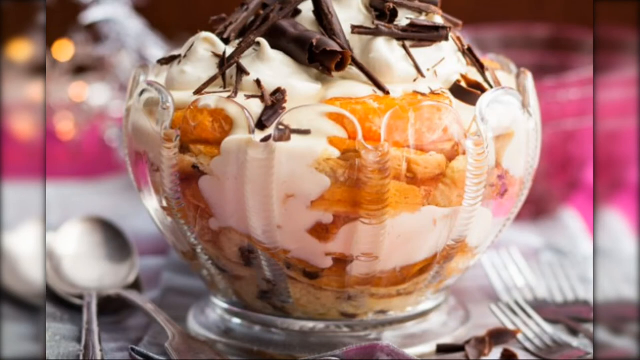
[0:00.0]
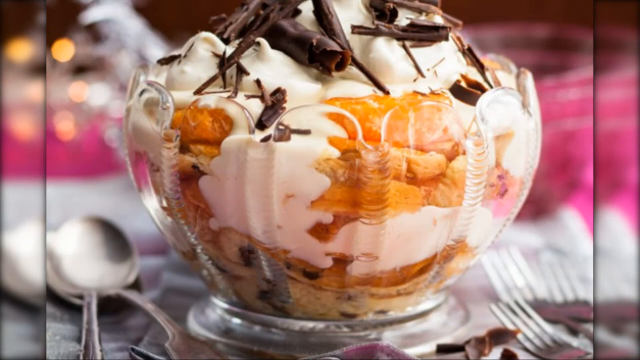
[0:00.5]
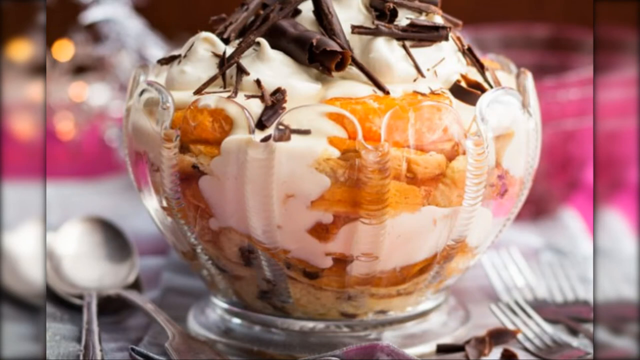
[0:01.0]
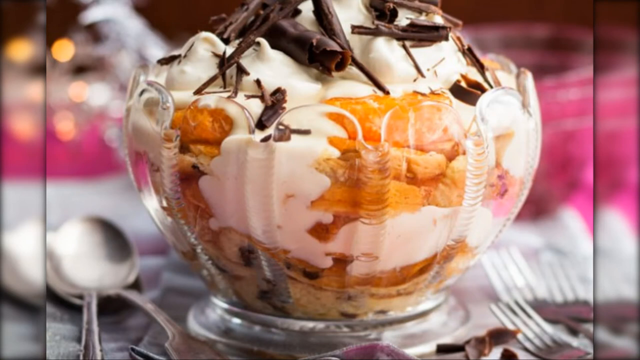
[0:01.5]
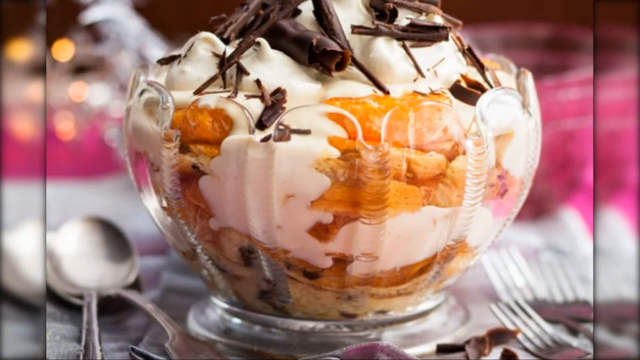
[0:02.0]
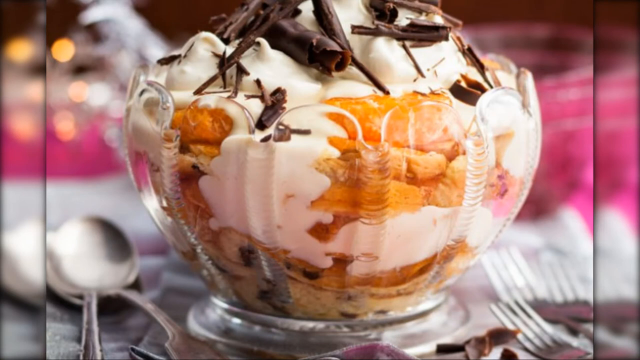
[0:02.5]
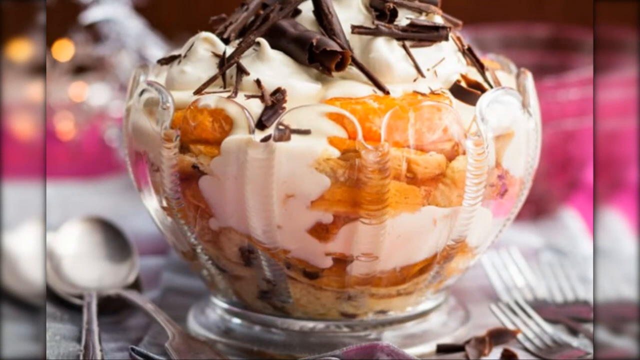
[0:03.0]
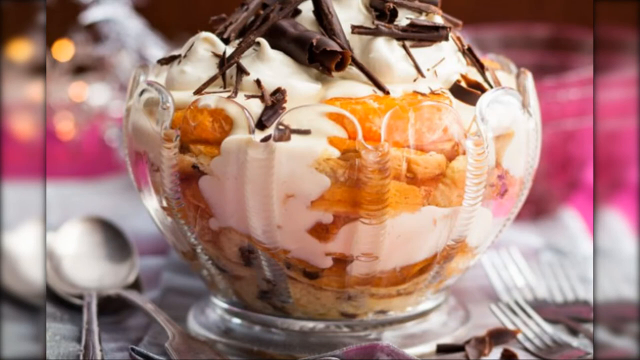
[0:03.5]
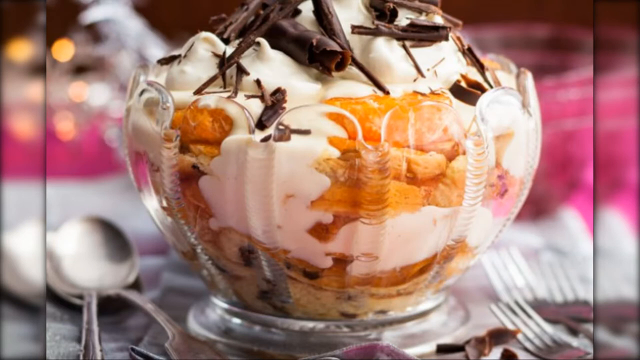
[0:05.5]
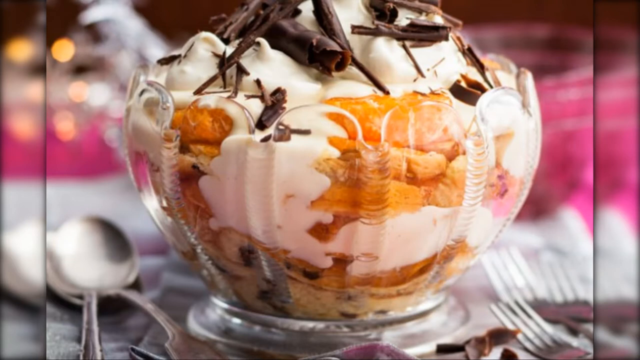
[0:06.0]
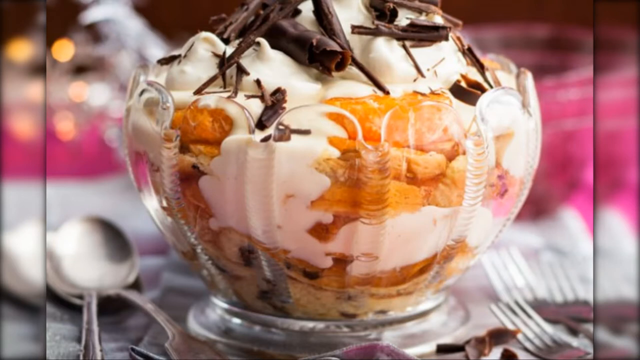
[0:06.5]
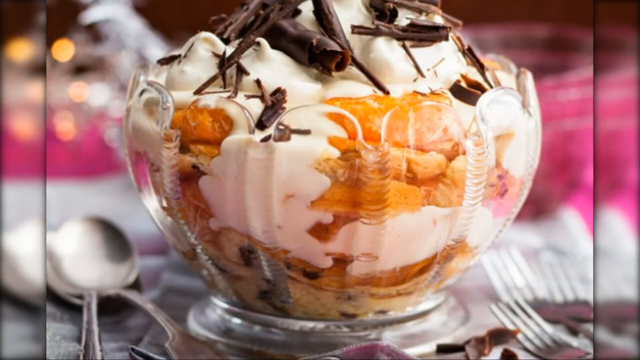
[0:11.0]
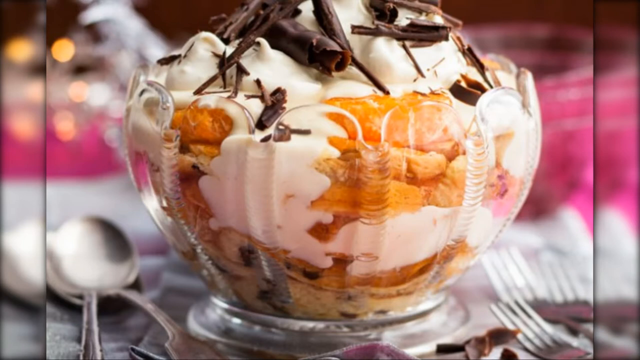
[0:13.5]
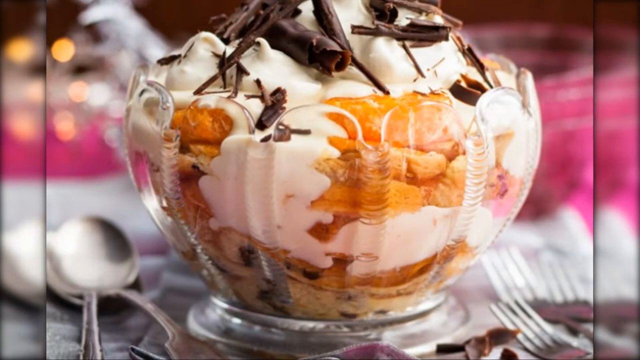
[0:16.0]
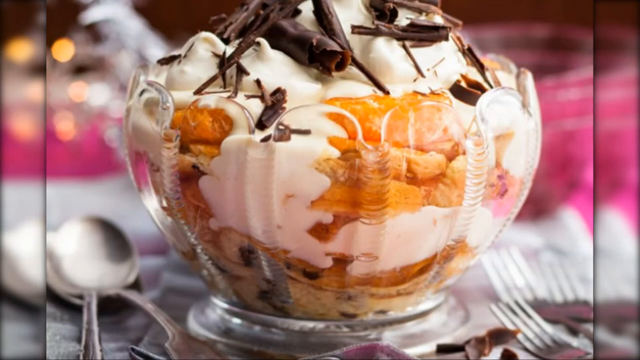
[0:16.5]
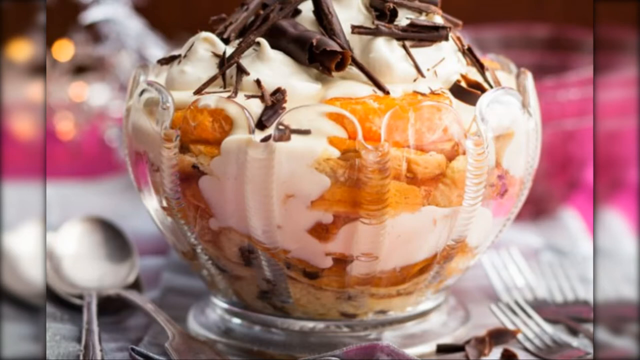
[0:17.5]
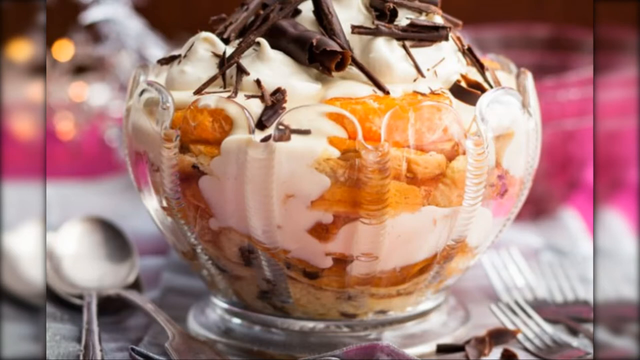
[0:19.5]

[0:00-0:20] A picture shows a small glass containing some kind of dessert, apparently with ice cream. The bottom seems to be lined with ladyfingers or cookies or something similar, and there is something very orangey in it. It is topped with vanilla ice cream, with chocolate shavings on the top. A spoon is sitting next to the dessert.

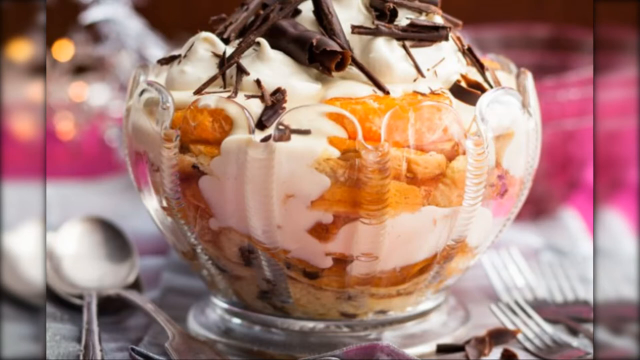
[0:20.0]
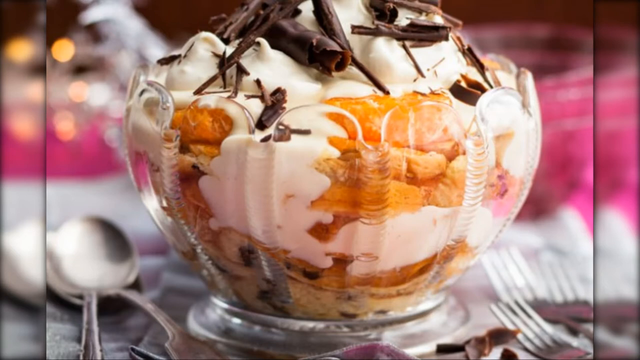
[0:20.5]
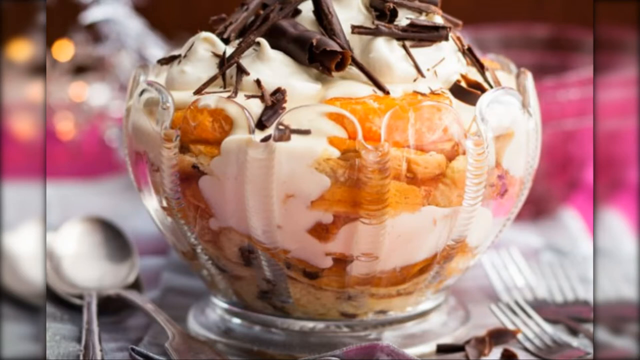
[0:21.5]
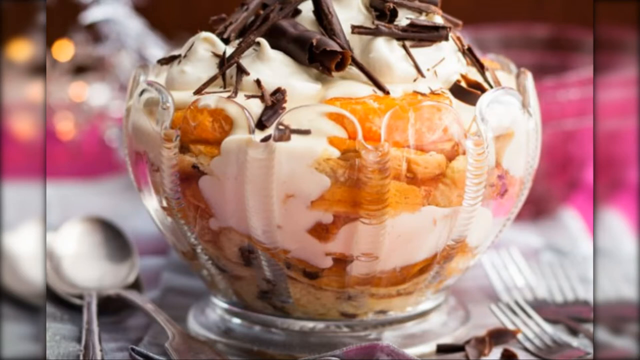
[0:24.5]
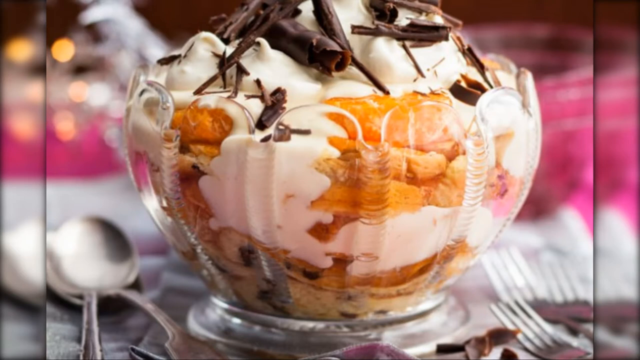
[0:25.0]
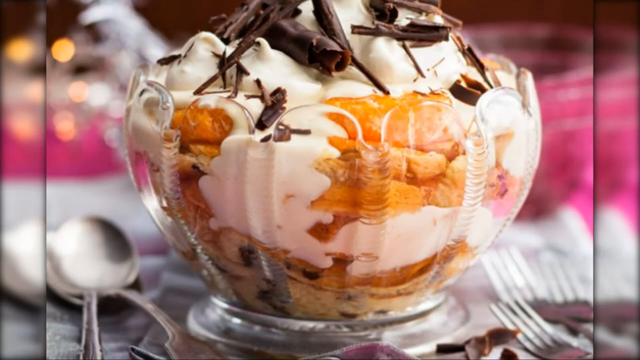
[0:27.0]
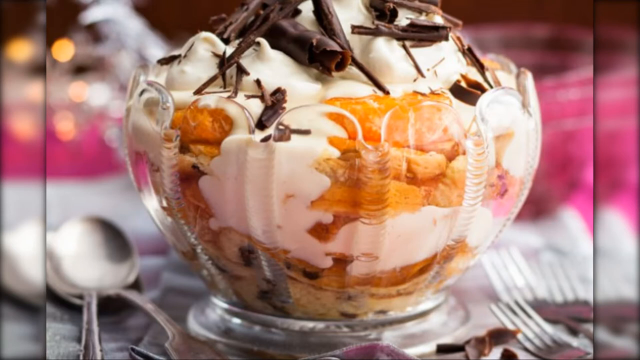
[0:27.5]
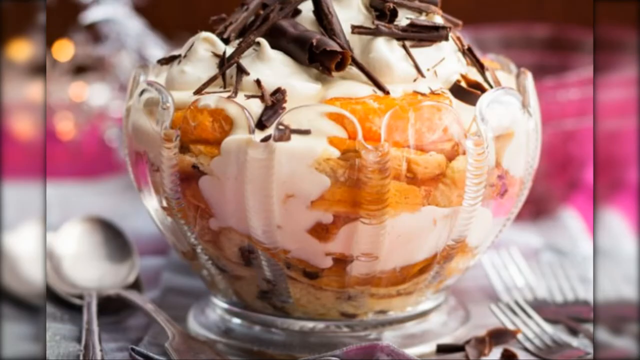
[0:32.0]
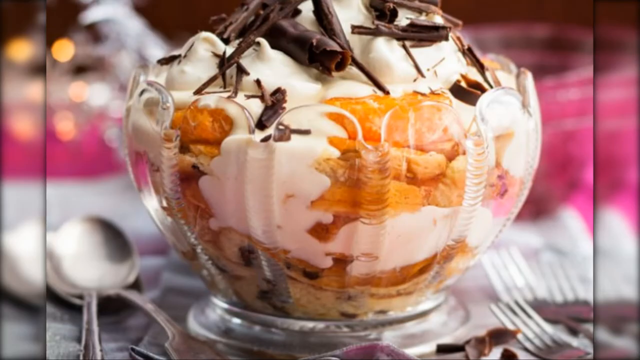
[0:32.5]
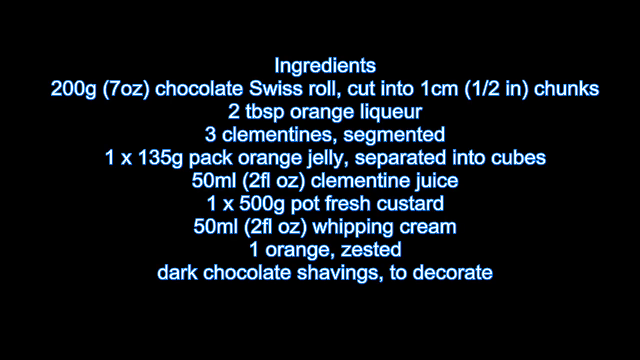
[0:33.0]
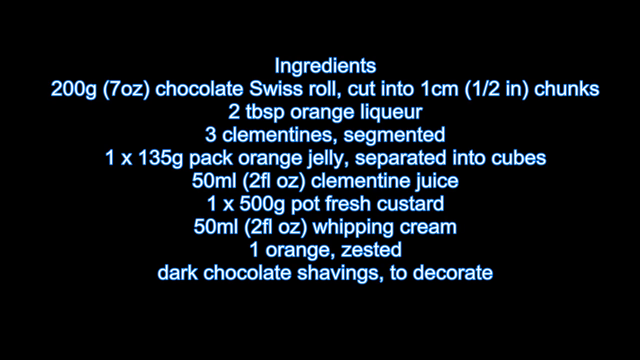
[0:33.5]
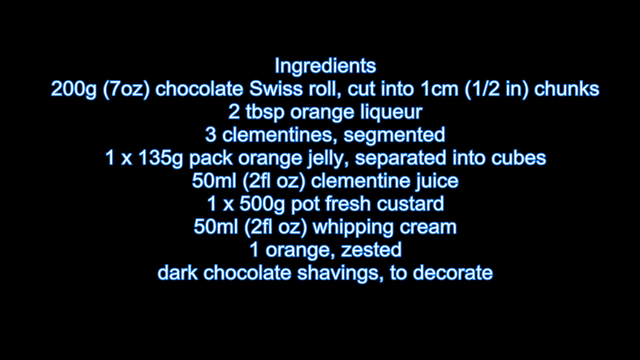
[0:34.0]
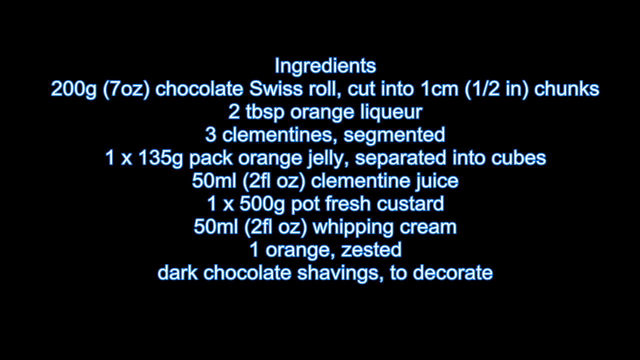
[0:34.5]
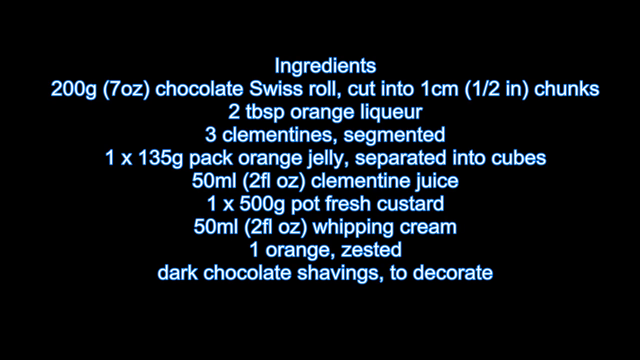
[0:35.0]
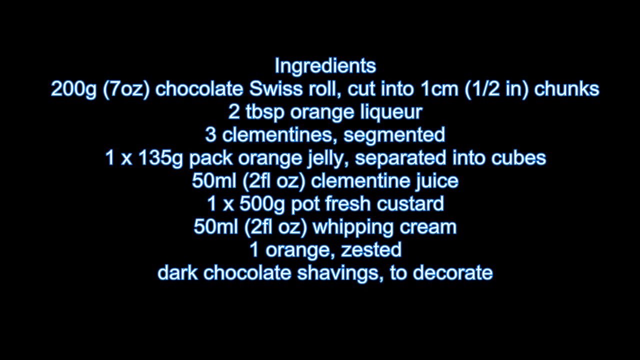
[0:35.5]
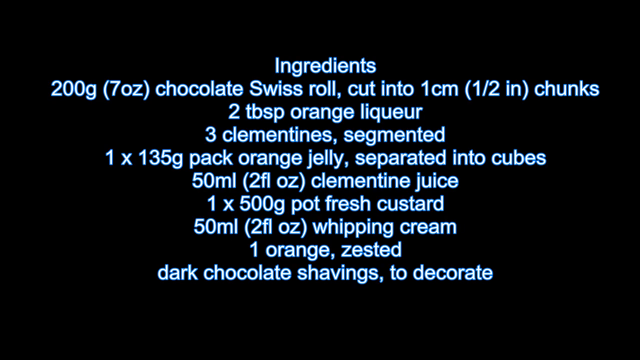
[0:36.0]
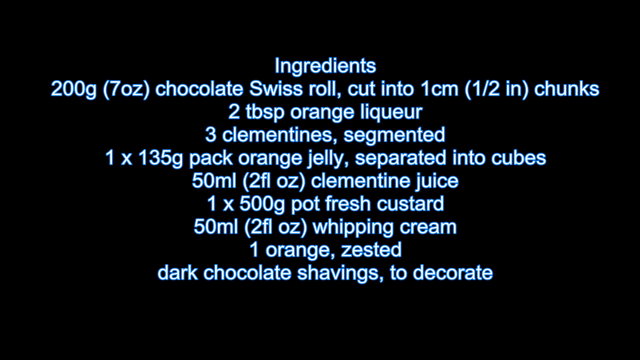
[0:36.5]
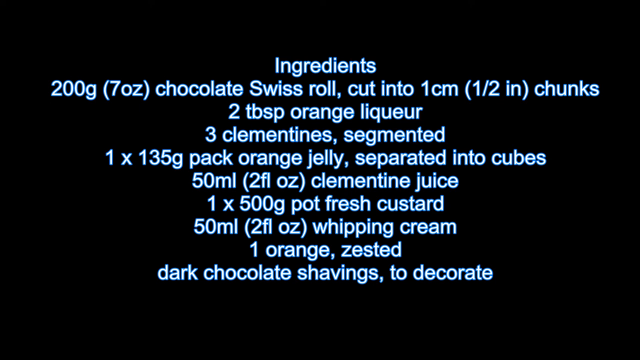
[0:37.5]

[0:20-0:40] At first the video looks the same as before, then it shows how to make the dish, listing "200 grams or 7 ounces of chocolate Swiss roll cut into 1 centimeter or 1⁄2 inch chunks, 2 tablespoons of orange liqueur, 3 clementines segmented, 135 gram pack of orange jelly separated into cubes, 50 milliliters or 2 fluid ounces of clementine juice".